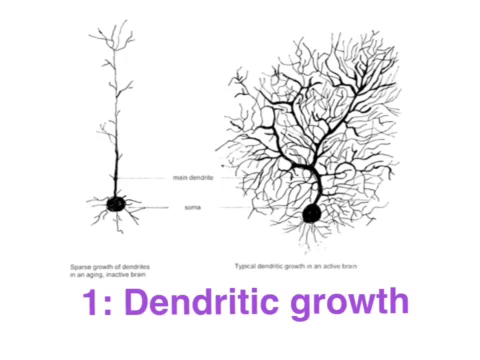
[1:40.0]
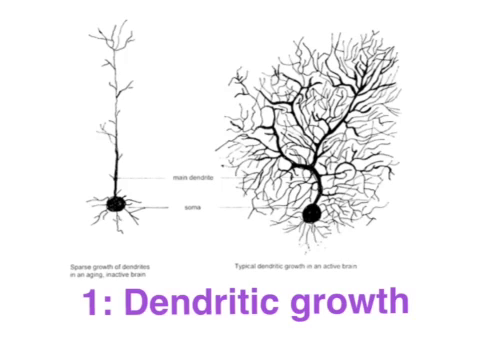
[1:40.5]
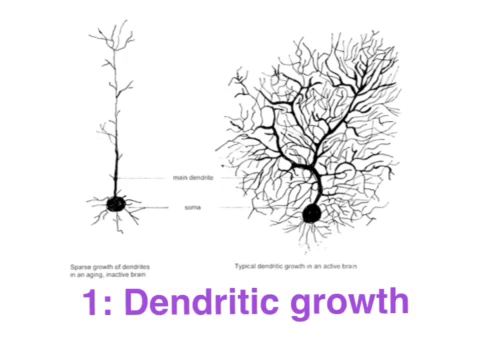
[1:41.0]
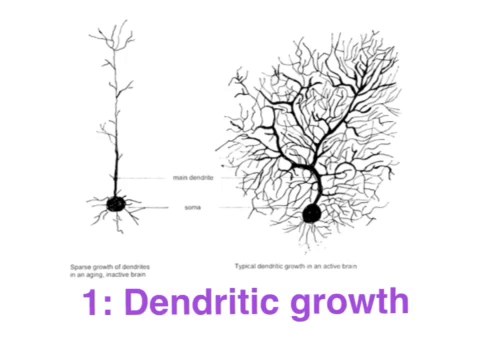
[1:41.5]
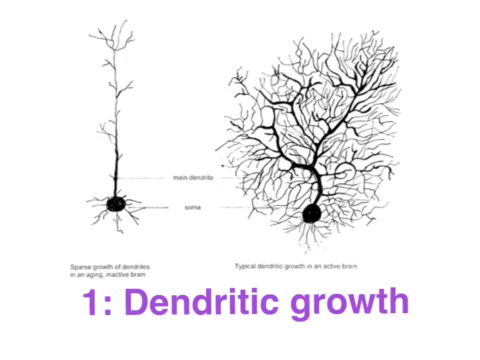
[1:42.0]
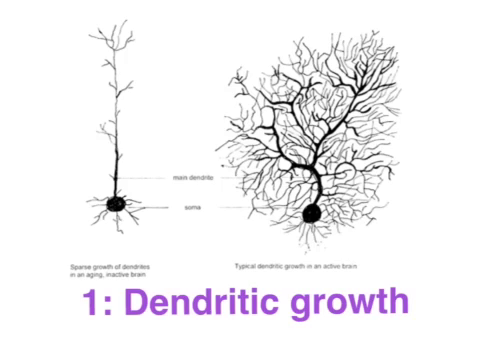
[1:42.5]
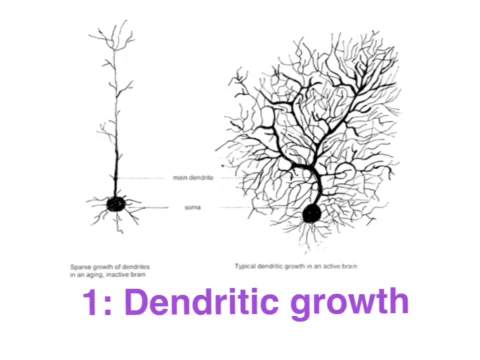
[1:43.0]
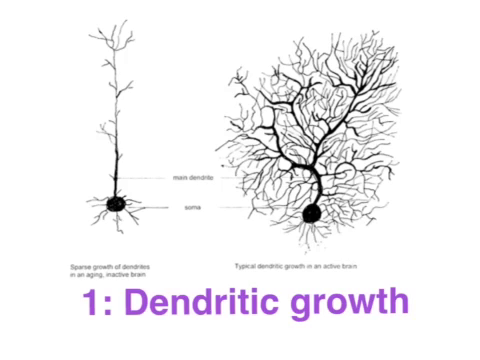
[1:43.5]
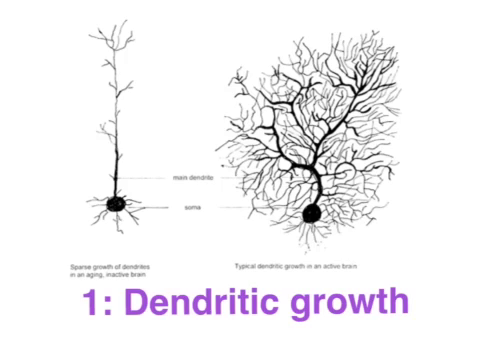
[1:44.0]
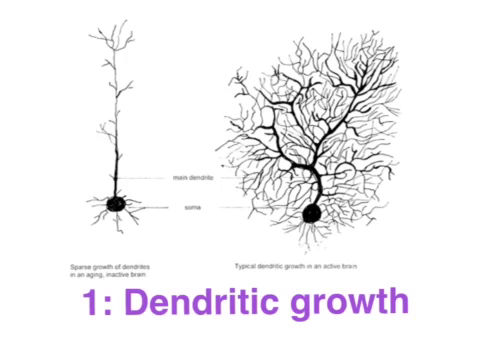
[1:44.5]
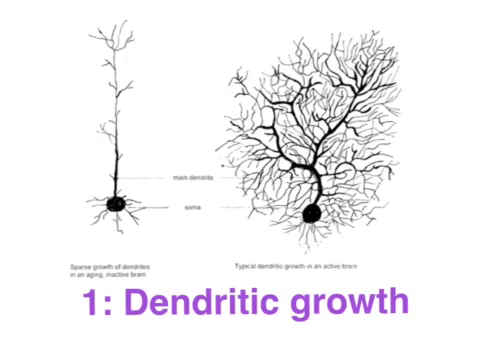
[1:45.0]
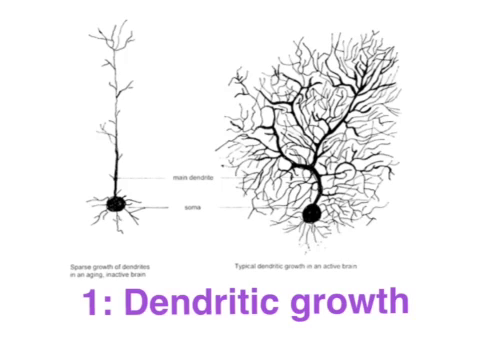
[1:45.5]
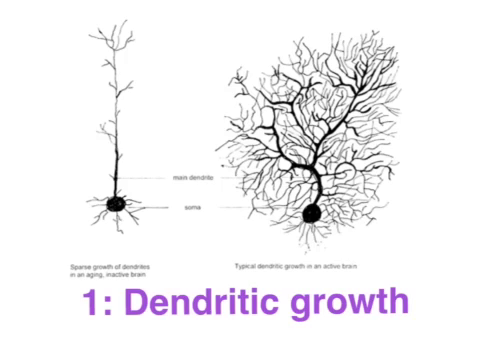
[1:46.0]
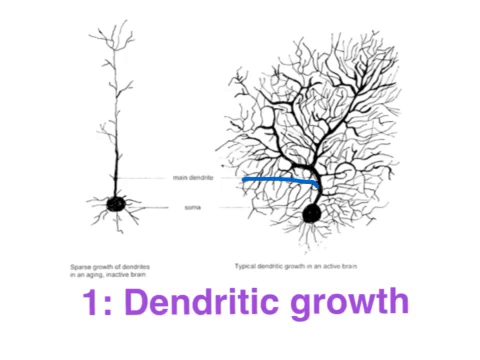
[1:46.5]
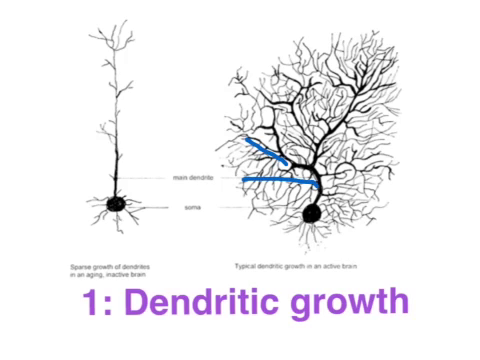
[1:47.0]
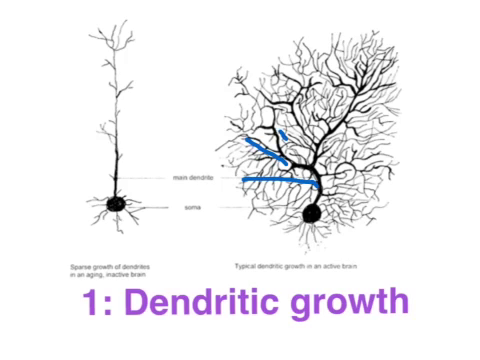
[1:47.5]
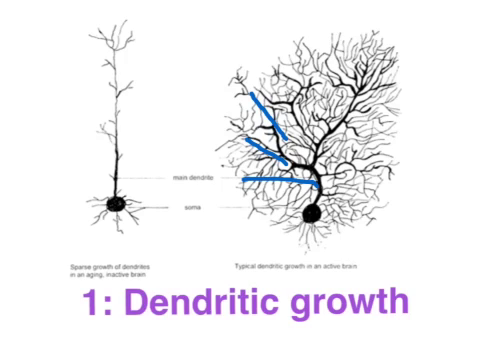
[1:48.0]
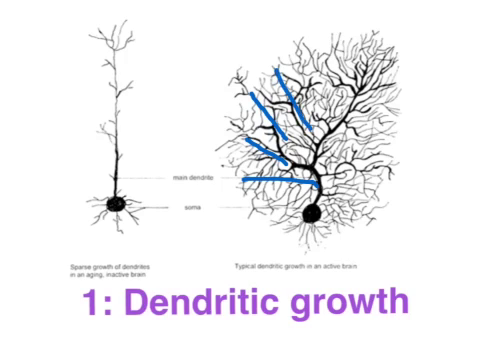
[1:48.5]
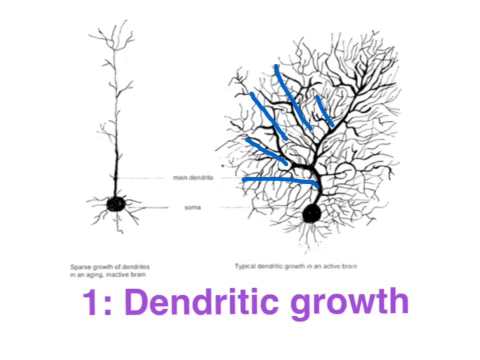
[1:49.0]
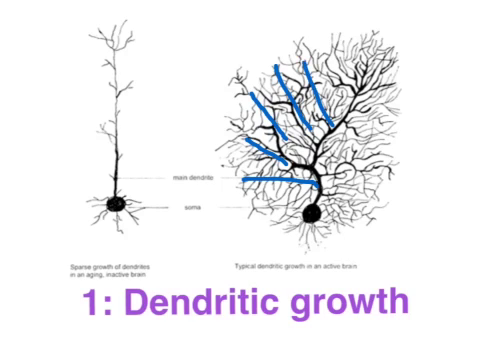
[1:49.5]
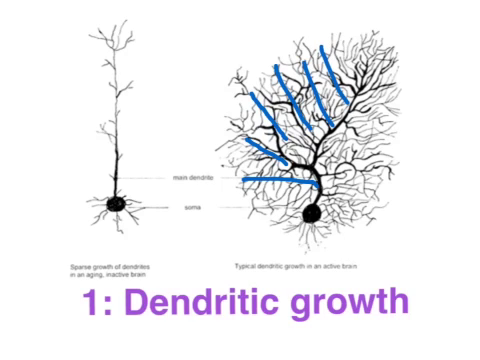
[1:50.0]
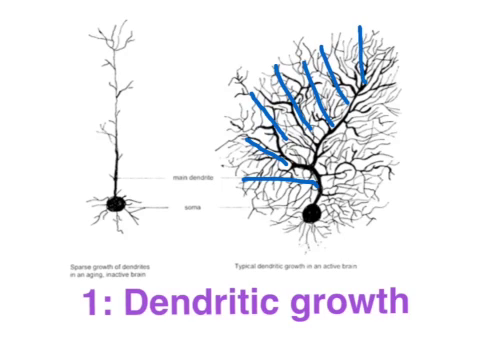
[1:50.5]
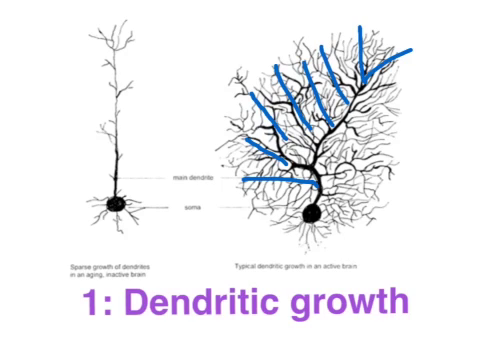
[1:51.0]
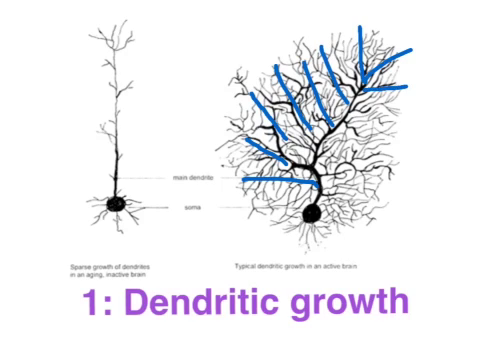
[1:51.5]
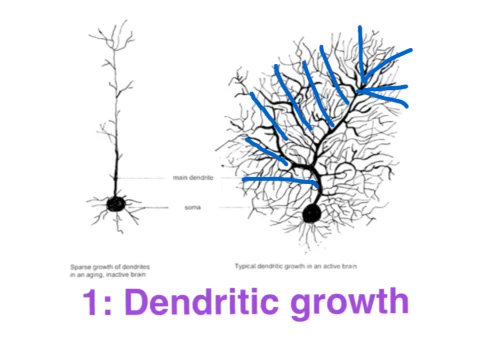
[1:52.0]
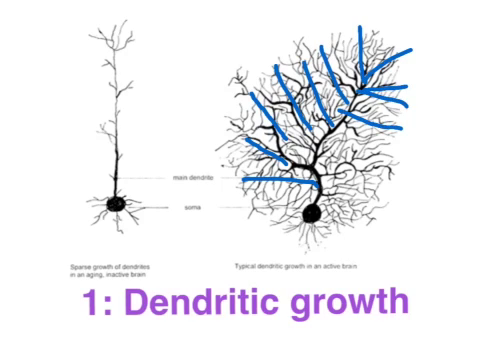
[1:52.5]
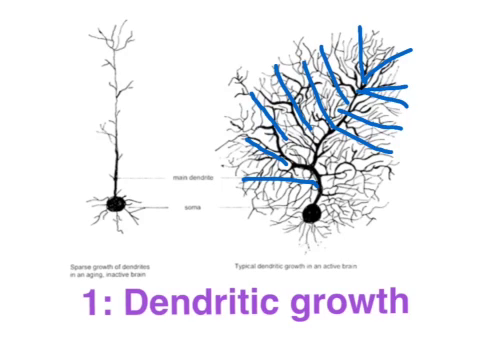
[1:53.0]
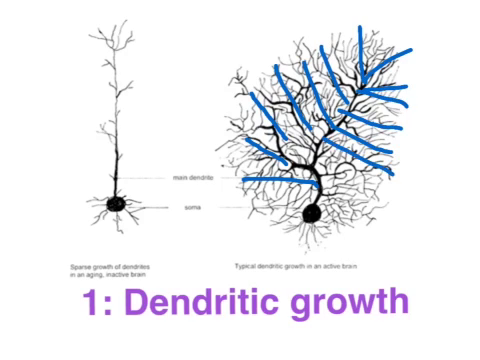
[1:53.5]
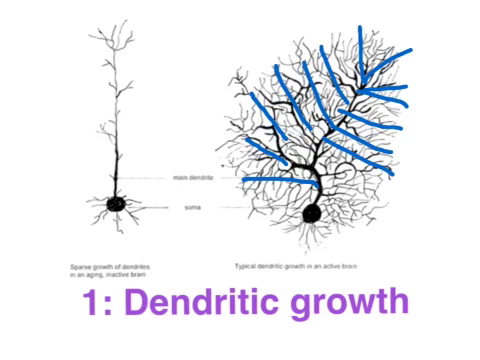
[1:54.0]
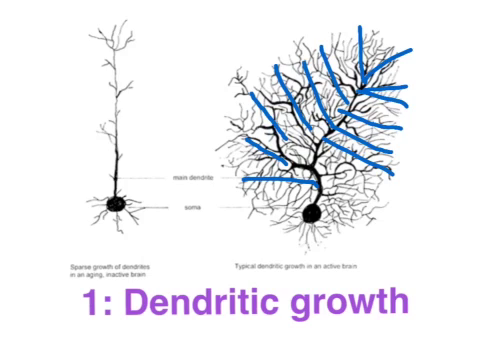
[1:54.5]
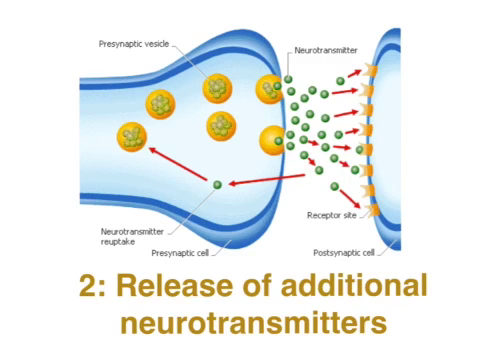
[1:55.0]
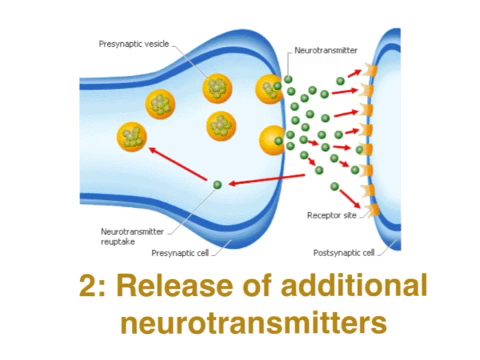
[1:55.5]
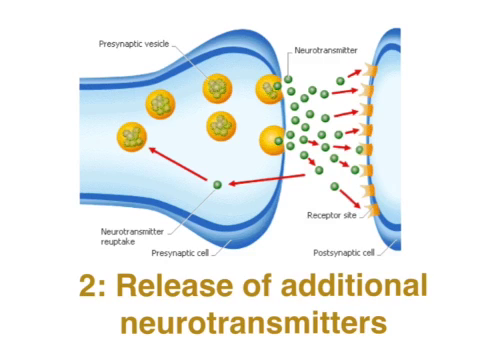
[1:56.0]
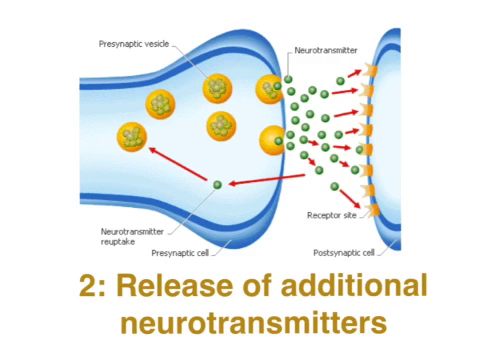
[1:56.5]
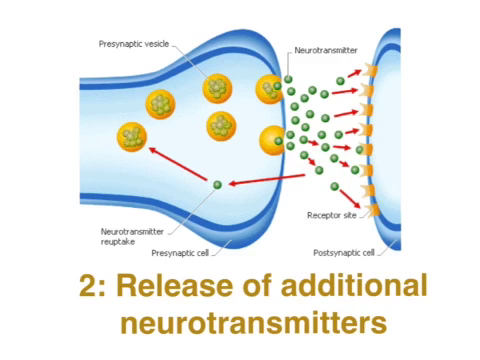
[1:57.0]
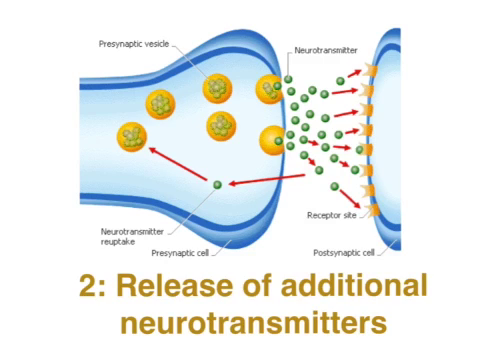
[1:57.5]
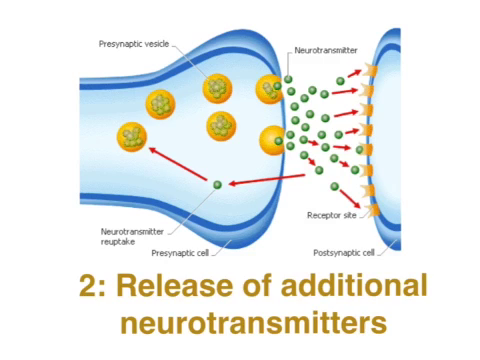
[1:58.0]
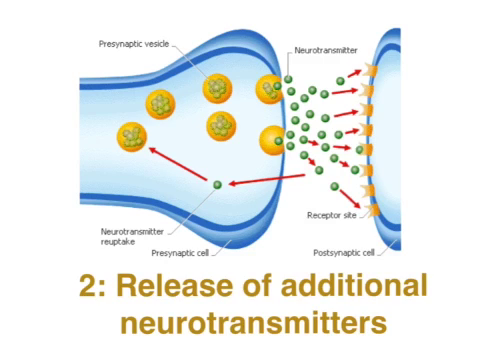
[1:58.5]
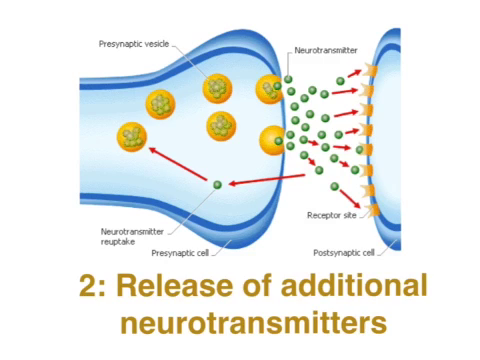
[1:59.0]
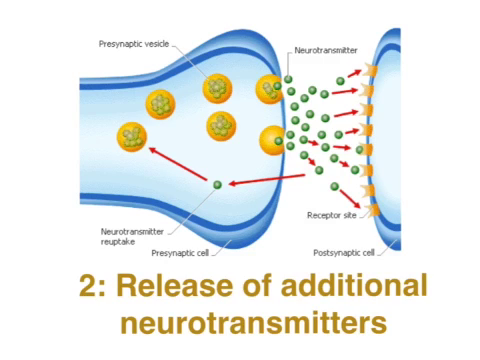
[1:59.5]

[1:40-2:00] The dendritic growth image continues. On the left is a black-and-white object resembling a tree with a single center trunk and a few branches; at its base is a round black circle with a few branches coming off it. The right side resembles a much more vigorous tree with several thick trunks and very many branches. The left is labeled "sparse growth of dendrites in an aging and active brain" and the right "typical dendritic growth in an active brain." A number of blue lines begin to appear on the right-hand image: seven go up from the tree trunk on the left-hand side, then six more appear on the trunk issuing out from the right-hand side. The image changes, with the caption underneath reading "2: Release of additional neurotransmitters." Above it is a blue object on its side, shaped like a butternut squash. At its wide end are six yellow circles containing smaller circles outlined in green. The top is labeled "presynaptic vesicle," and underneath are the labels "neurotransmitter reuptake" and "presynaptic cell." On the right side of the screen is a blue half circle, and between the two objects is the word "neurotransmitter." Numerous green dots appear between the objects, with red arrows indicating motion to the right. At the bottom are the words "receptor site" and "postsynaptic cell."